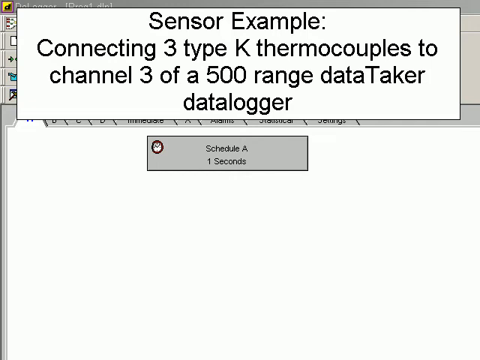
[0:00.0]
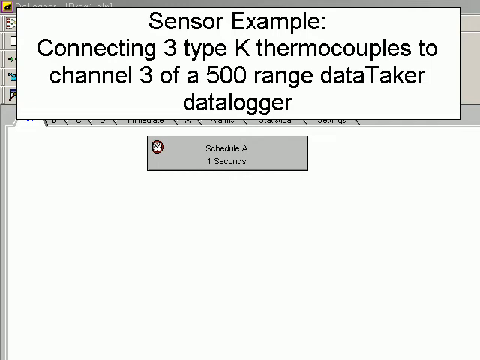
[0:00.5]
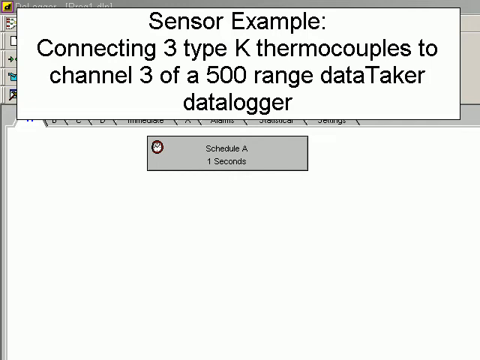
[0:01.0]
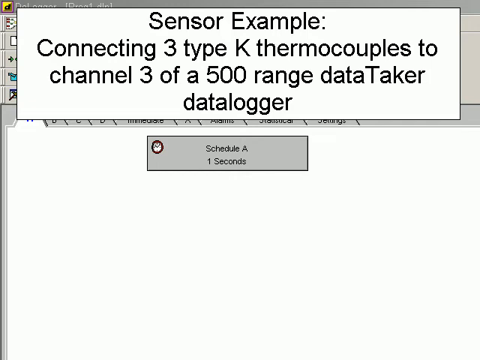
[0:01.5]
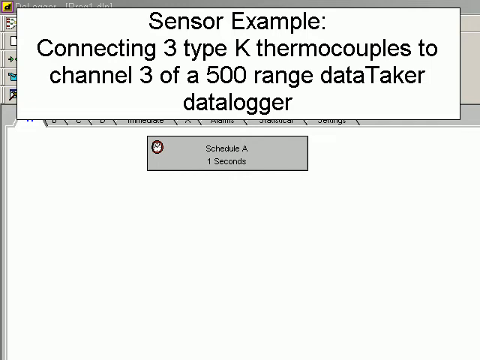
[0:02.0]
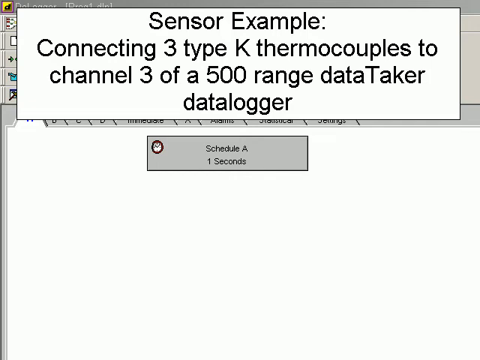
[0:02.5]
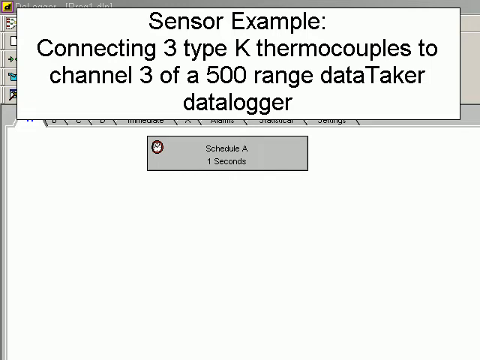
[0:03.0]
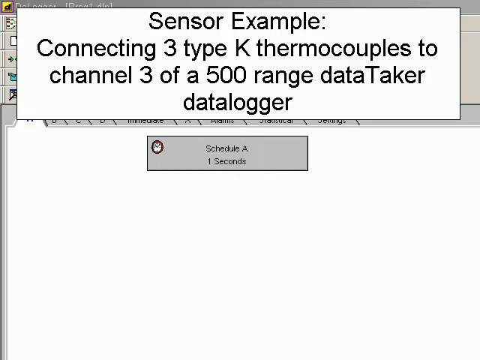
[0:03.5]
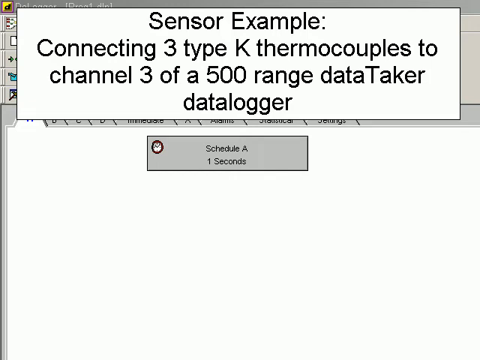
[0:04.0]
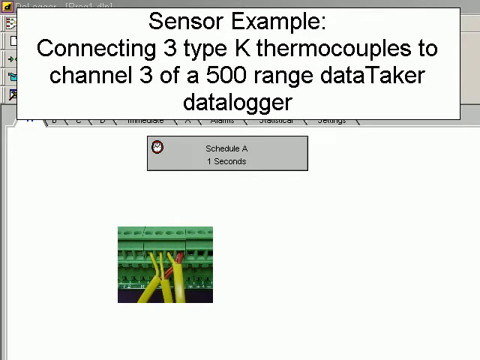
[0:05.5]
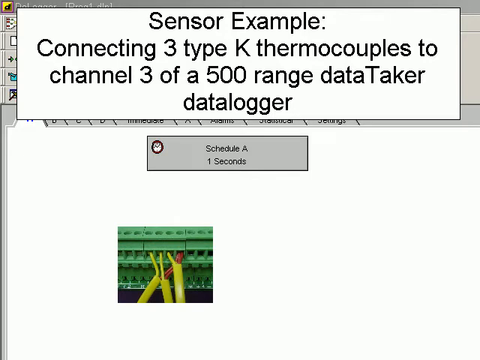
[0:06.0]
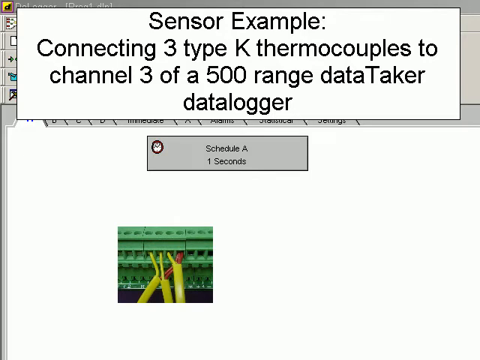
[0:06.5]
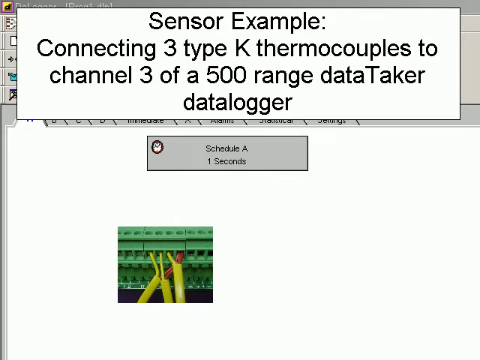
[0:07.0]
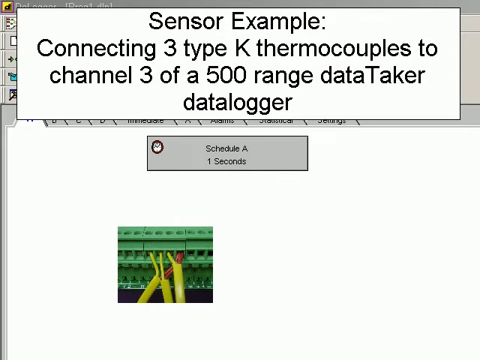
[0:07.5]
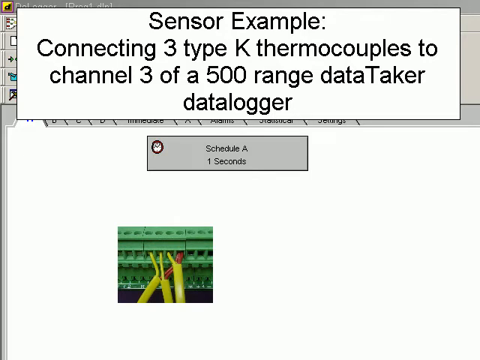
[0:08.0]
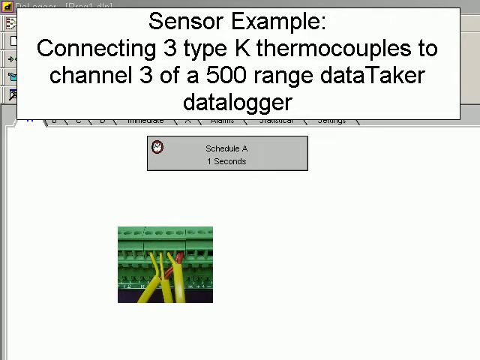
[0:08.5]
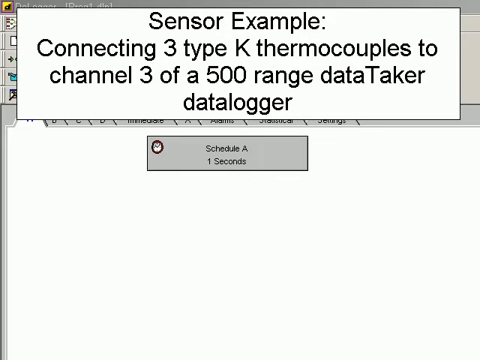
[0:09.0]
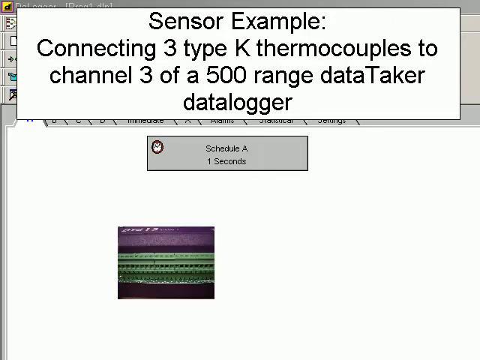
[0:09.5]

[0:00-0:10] What looks to be a very old computer program, seemingly from the 80s or 90s, is on screen. At the top is a white box with text that says "sensor example: connecting three type k thermocouples to channel 3 of a 500 range data taker data logger". Below it a grey box says "schedule A, 1 seconds", and below that a quick image appears of what seems to be some wires and some ports. The large white box covers the area where the program's name would be, so the name cannot be seen.